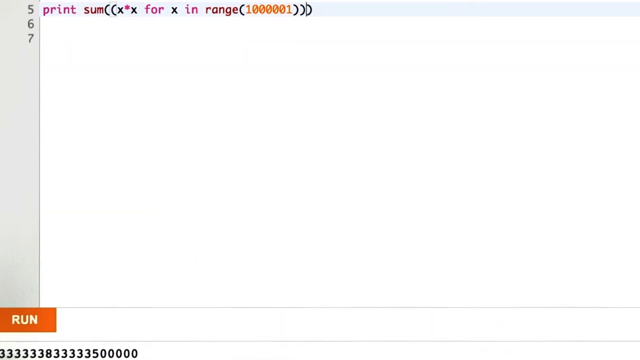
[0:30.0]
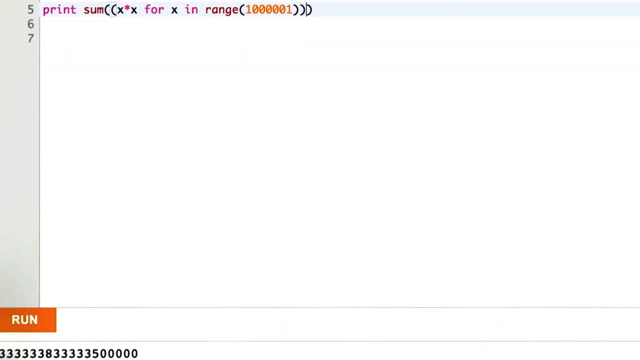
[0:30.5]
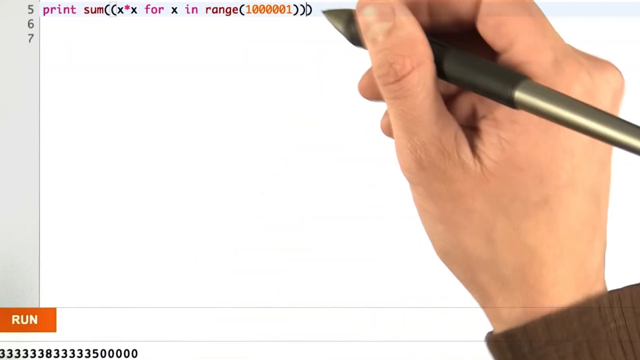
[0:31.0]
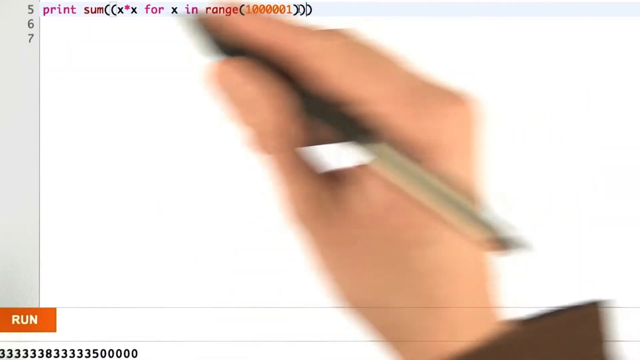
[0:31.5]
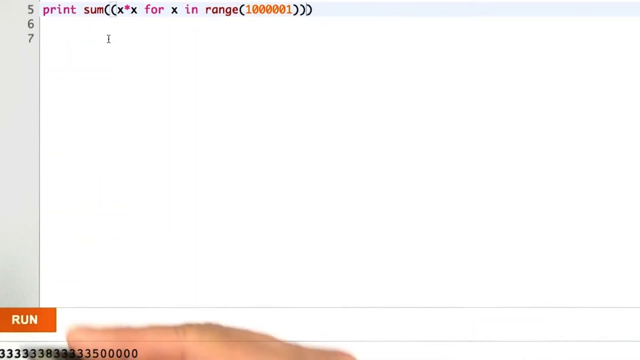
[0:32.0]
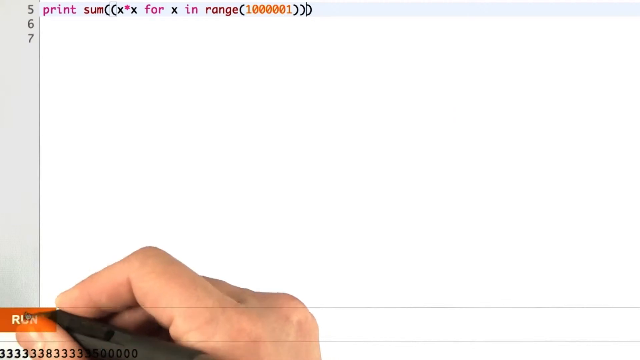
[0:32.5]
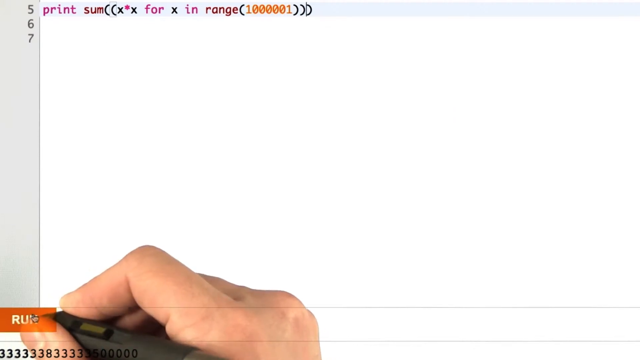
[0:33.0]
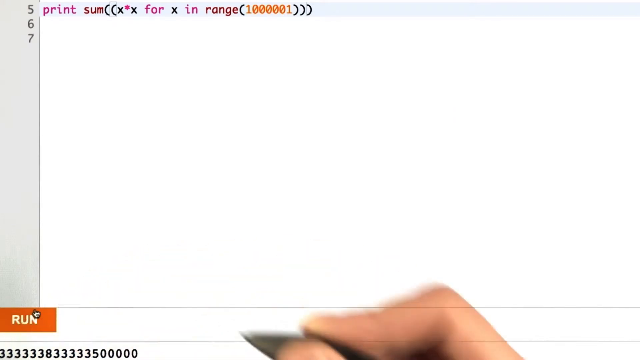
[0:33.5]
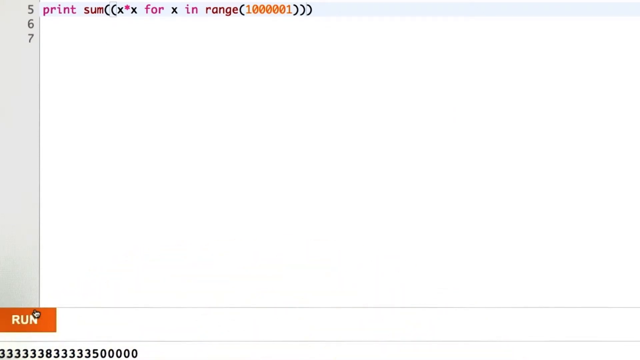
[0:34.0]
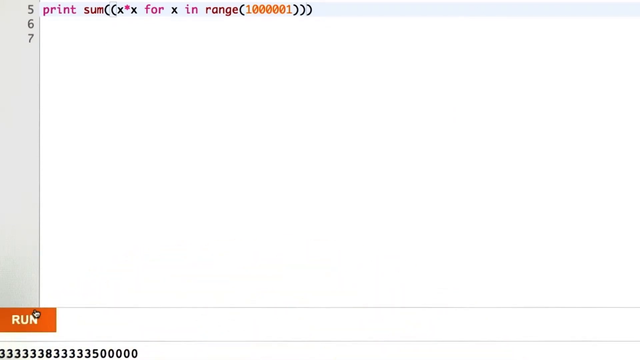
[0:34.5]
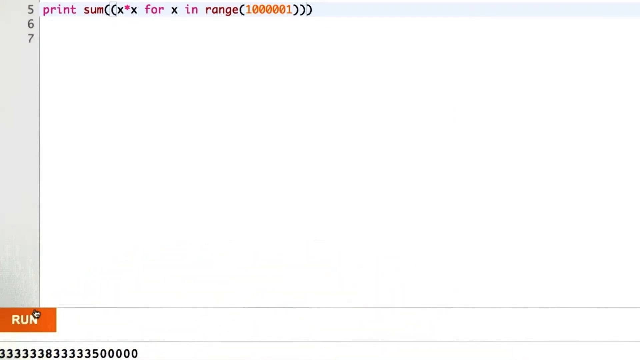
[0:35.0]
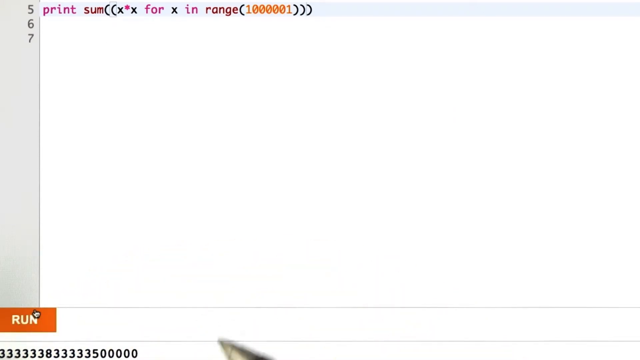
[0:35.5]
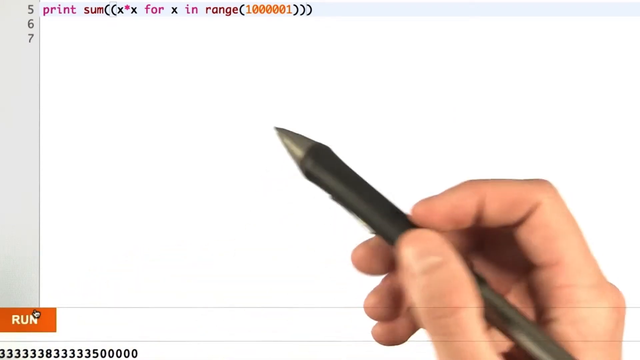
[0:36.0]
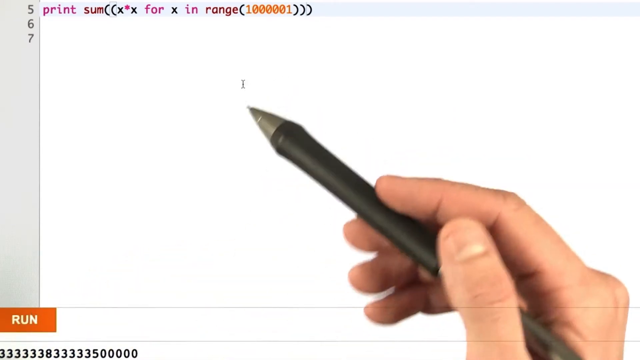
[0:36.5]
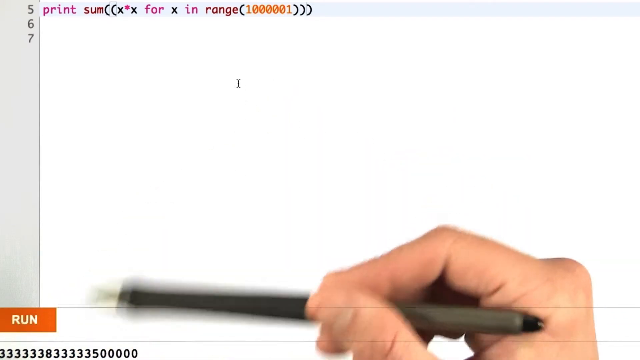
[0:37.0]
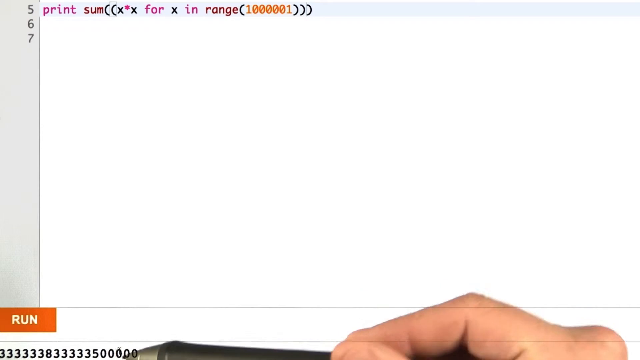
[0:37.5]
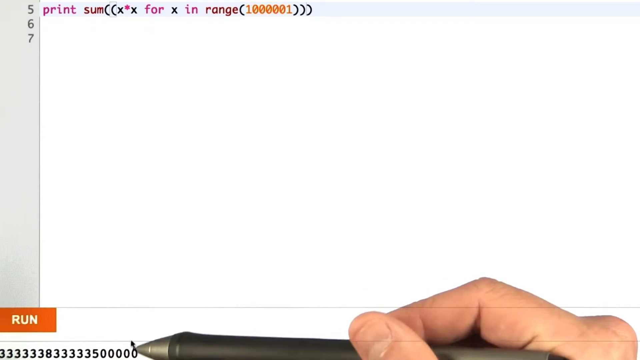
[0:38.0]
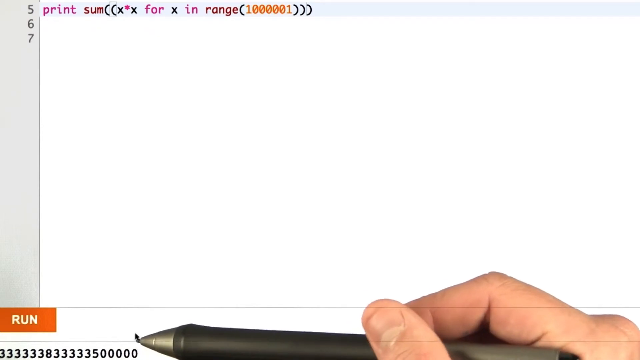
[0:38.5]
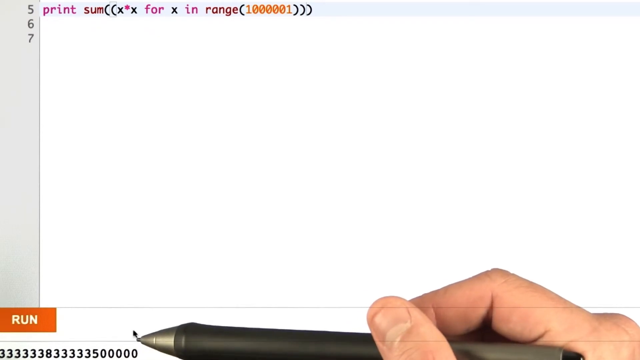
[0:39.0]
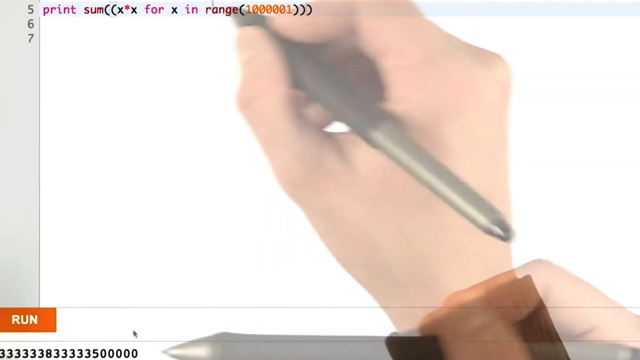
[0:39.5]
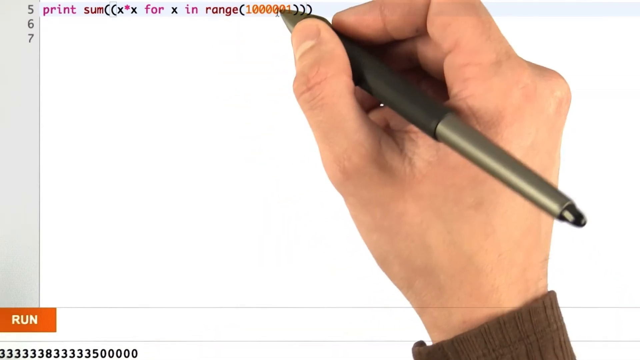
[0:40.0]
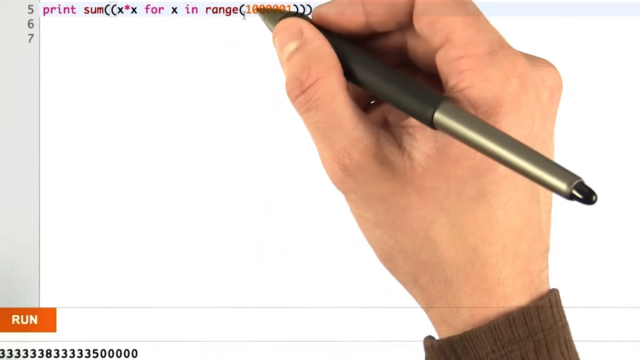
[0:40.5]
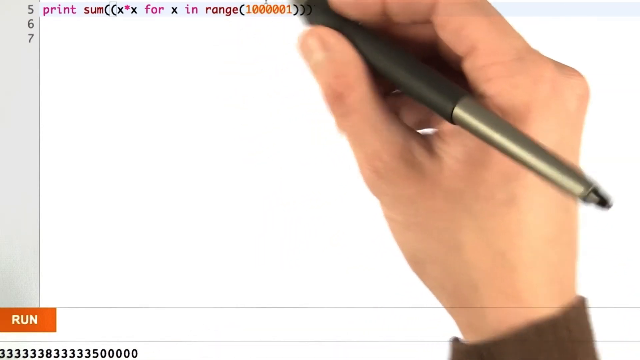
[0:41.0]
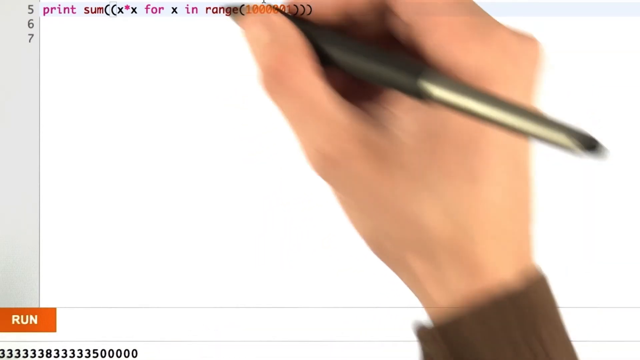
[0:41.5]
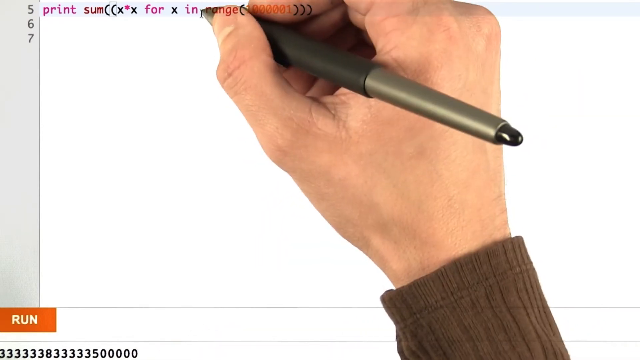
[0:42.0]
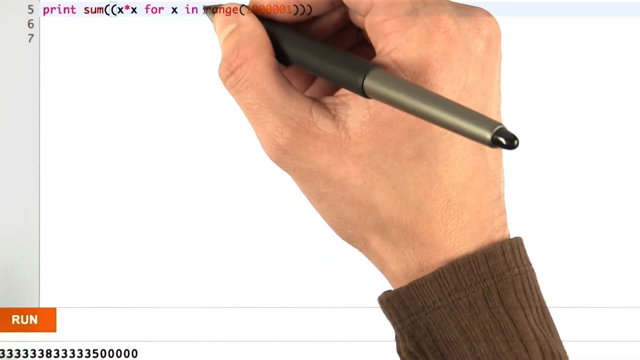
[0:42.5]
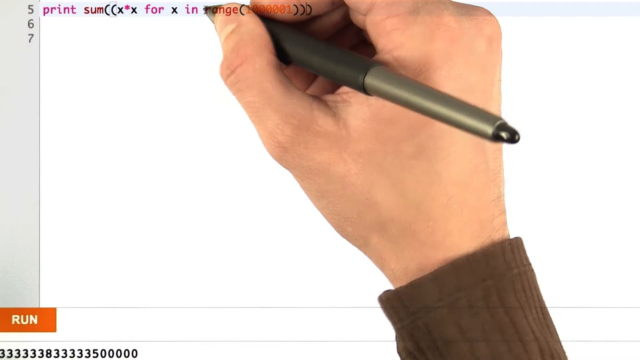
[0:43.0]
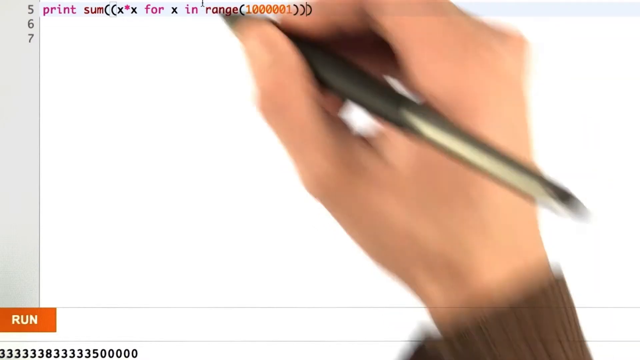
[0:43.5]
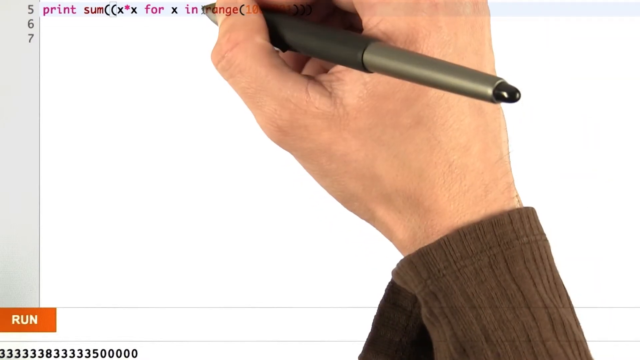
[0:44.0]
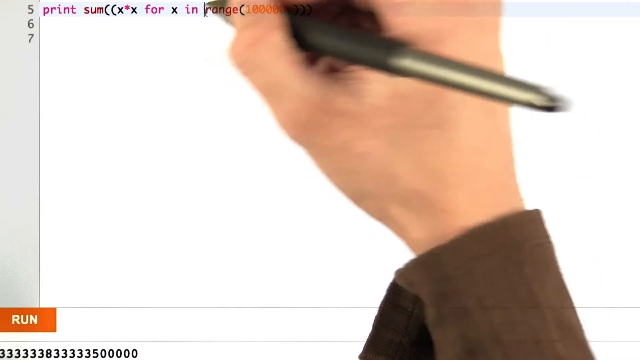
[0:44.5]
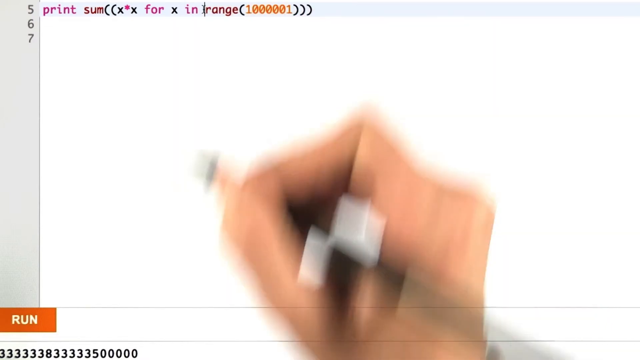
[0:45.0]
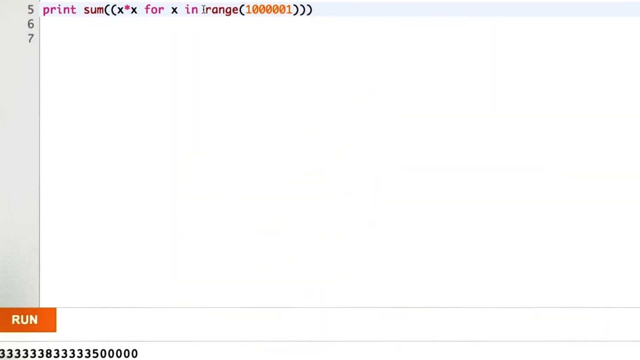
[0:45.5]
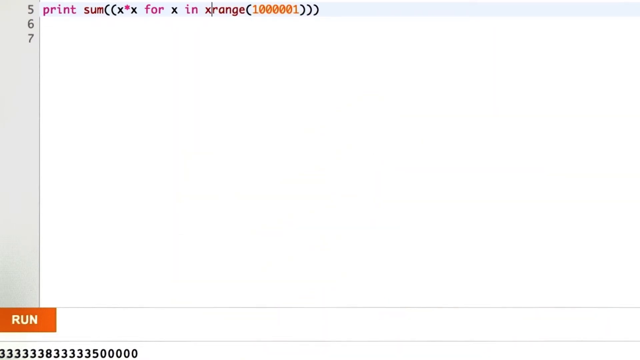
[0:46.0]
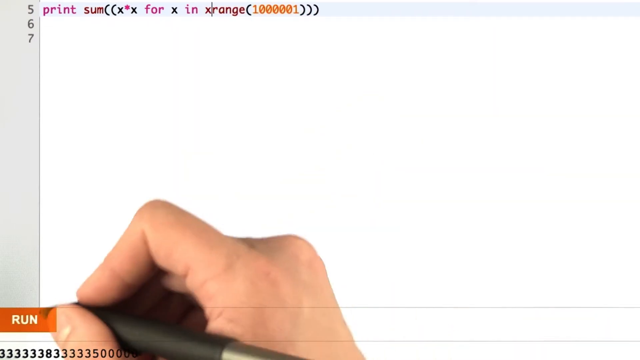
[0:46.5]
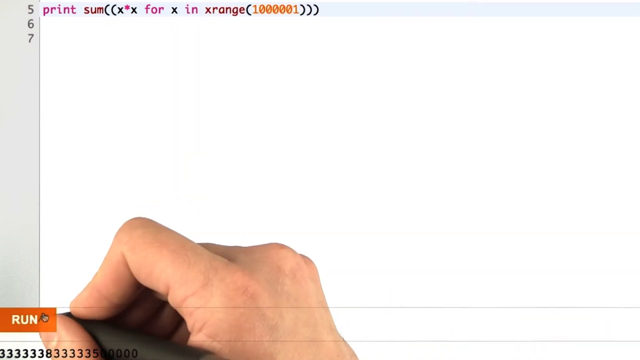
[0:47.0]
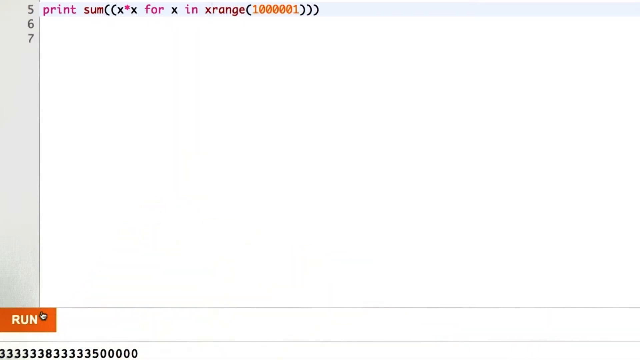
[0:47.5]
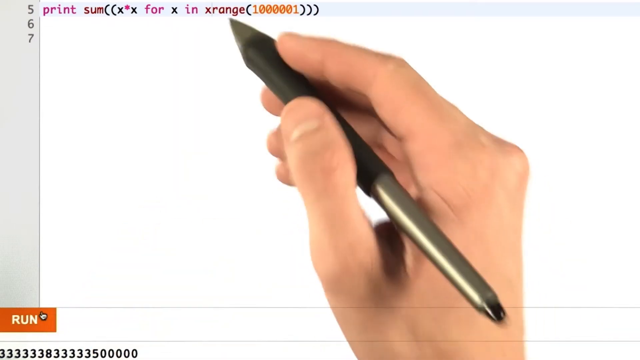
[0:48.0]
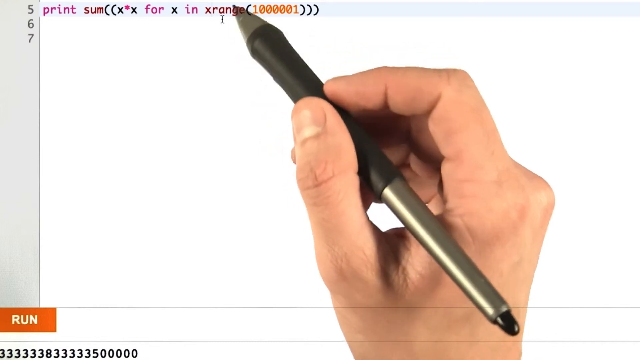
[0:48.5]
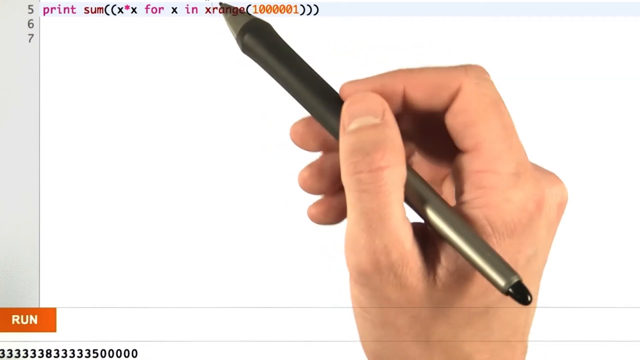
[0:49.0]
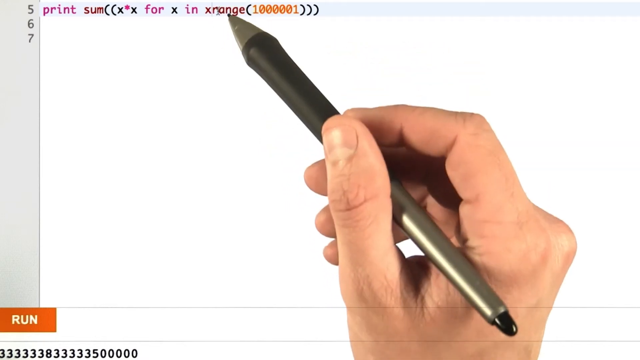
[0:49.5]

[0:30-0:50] The man picks up where he left off, pointing at the first code at line five, a print sum code with a variable that runs in a range of ones and zeros. He moves his pen down and shows the run button, and a bunch of numbers pop up at the bottom. He then starts putting lines in the range area and taking out variables in the range, apparently having found that he did not need that many variables in that string of code.